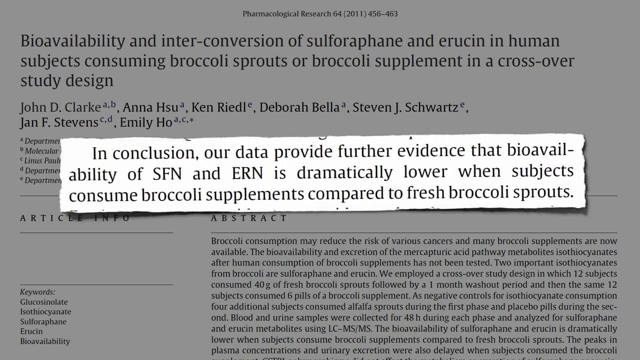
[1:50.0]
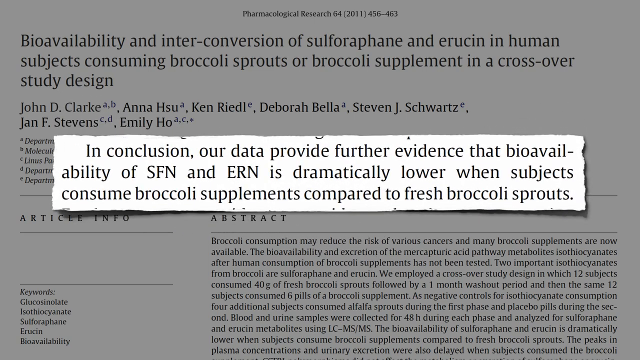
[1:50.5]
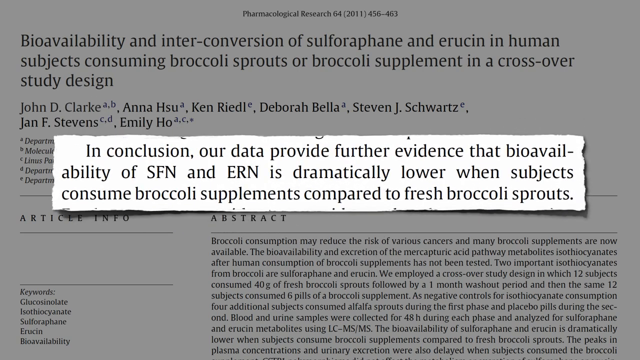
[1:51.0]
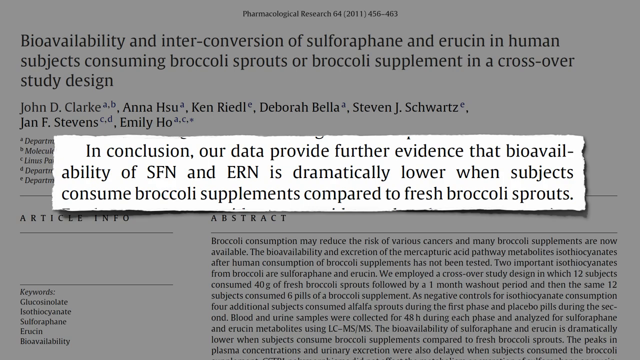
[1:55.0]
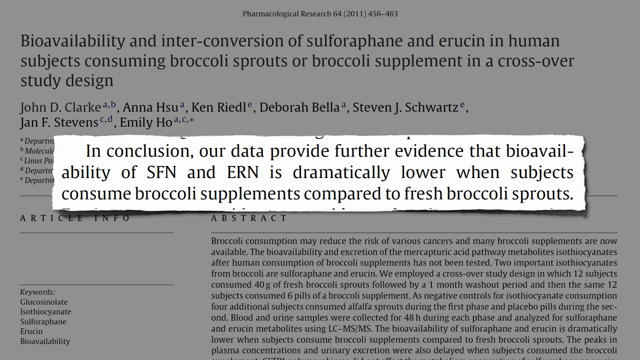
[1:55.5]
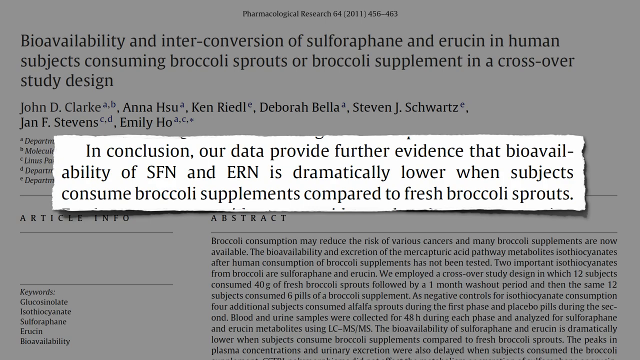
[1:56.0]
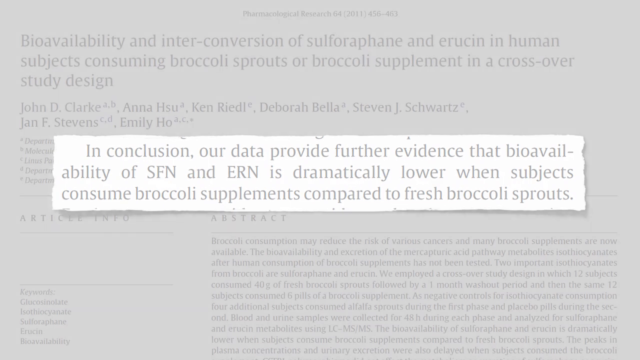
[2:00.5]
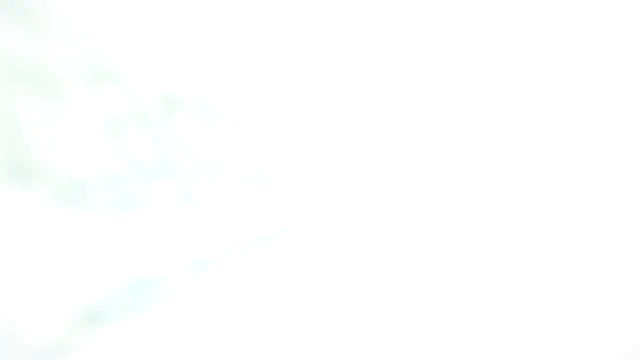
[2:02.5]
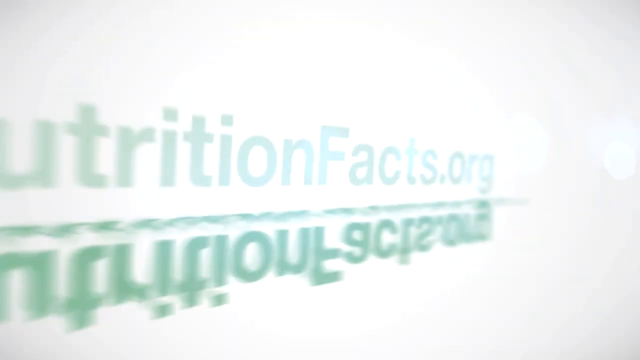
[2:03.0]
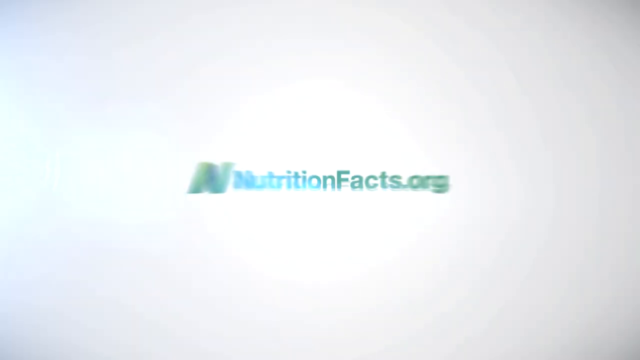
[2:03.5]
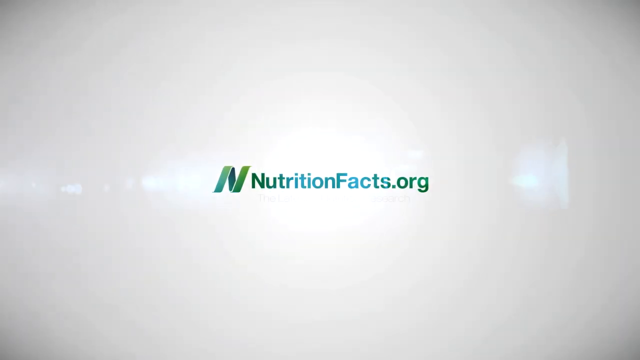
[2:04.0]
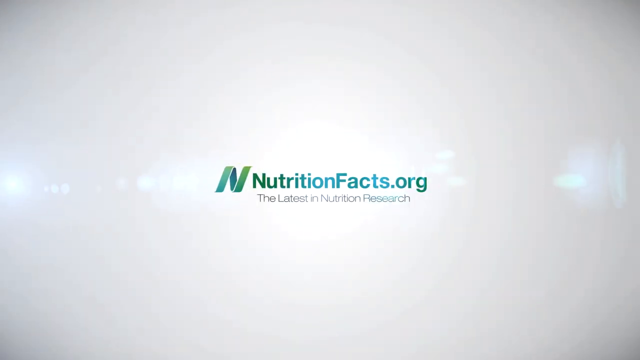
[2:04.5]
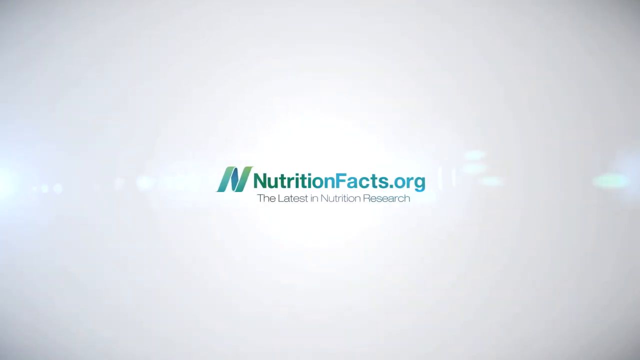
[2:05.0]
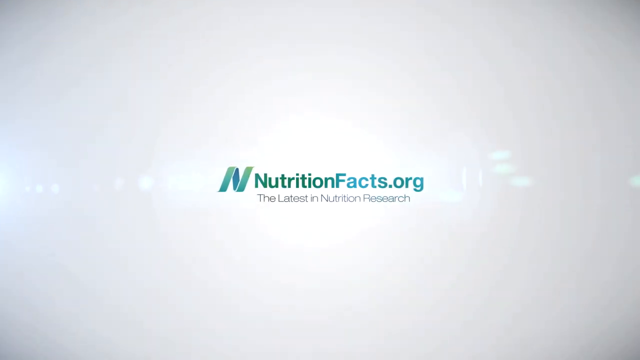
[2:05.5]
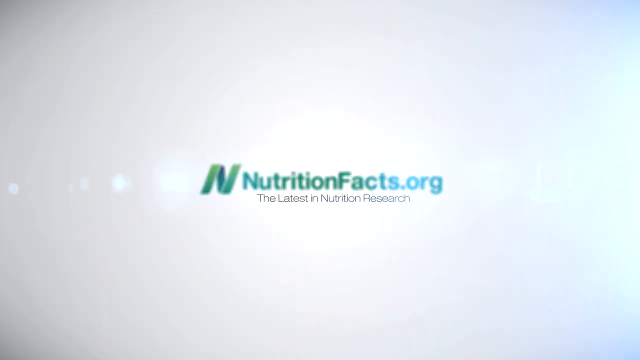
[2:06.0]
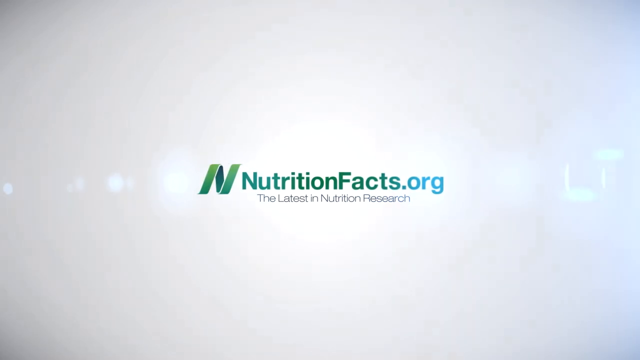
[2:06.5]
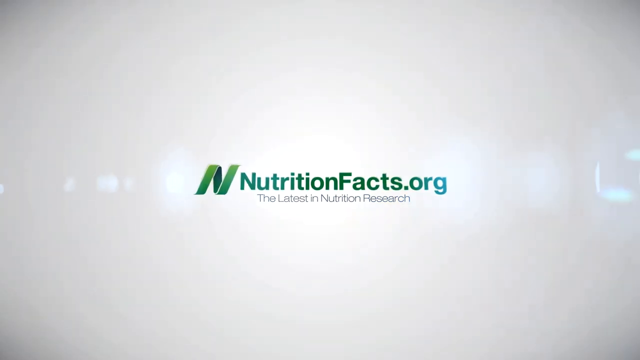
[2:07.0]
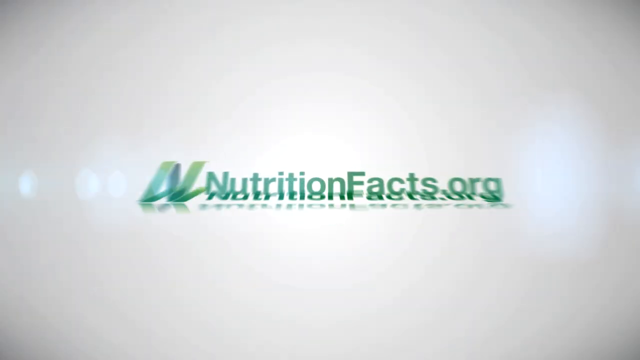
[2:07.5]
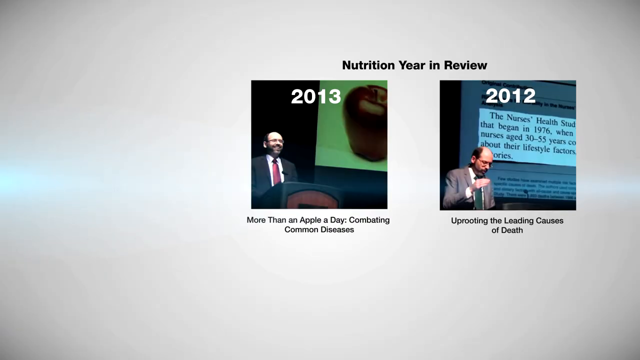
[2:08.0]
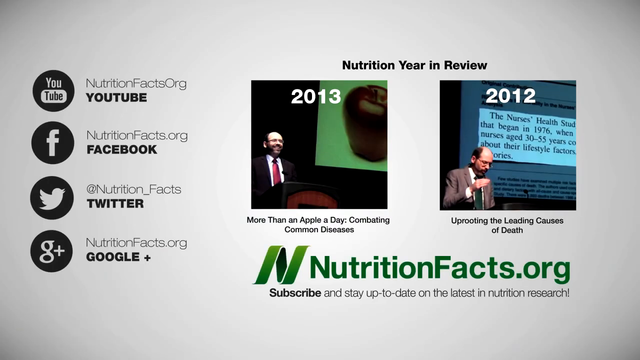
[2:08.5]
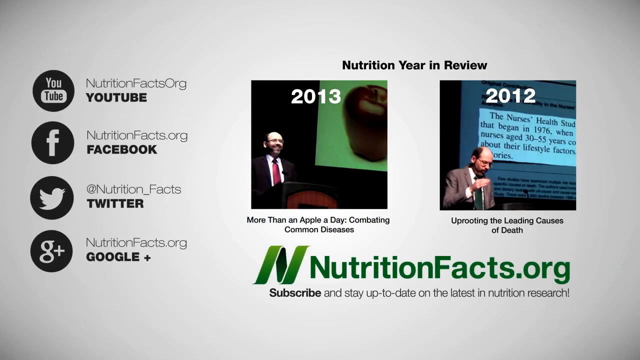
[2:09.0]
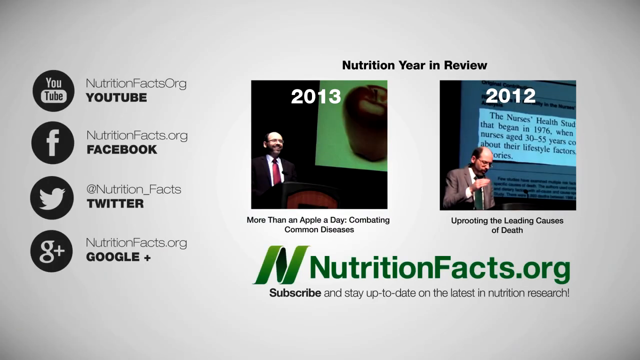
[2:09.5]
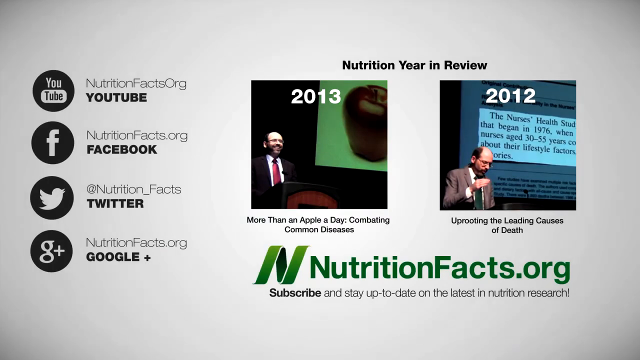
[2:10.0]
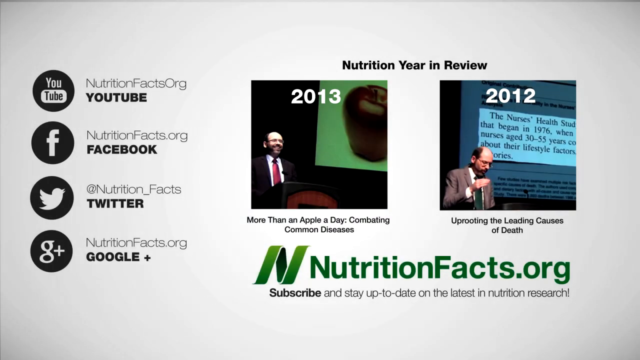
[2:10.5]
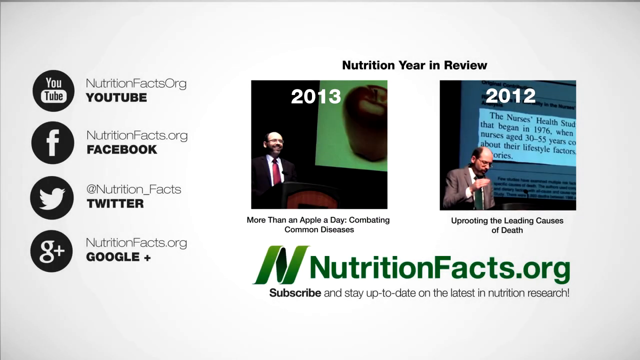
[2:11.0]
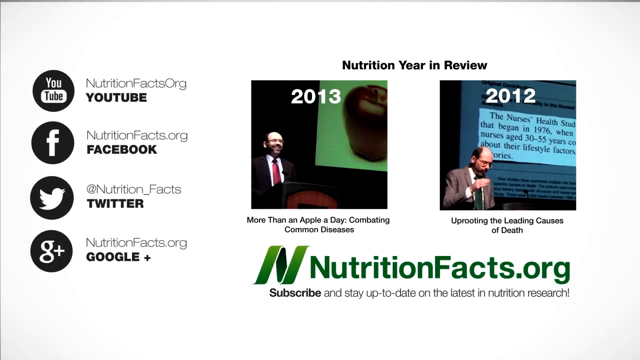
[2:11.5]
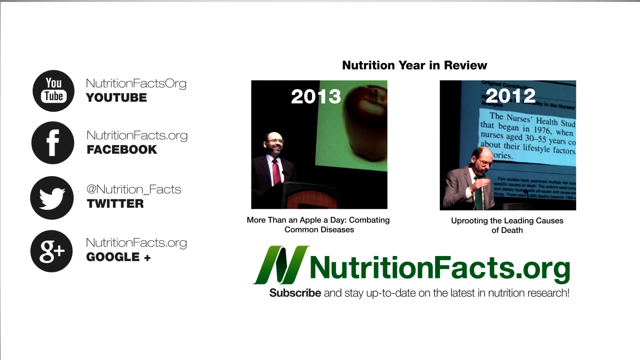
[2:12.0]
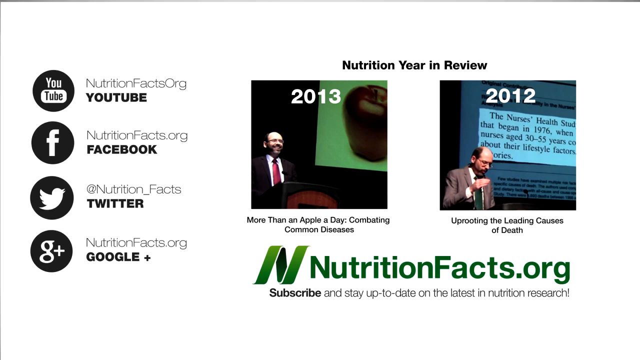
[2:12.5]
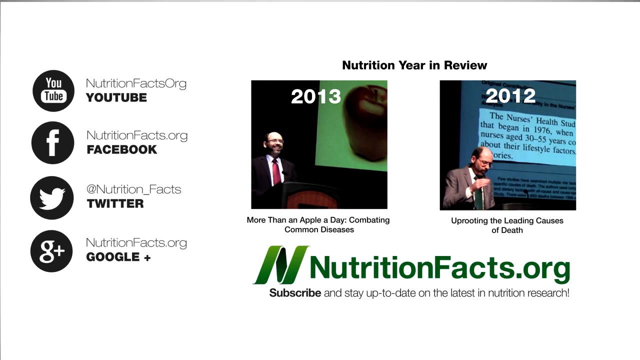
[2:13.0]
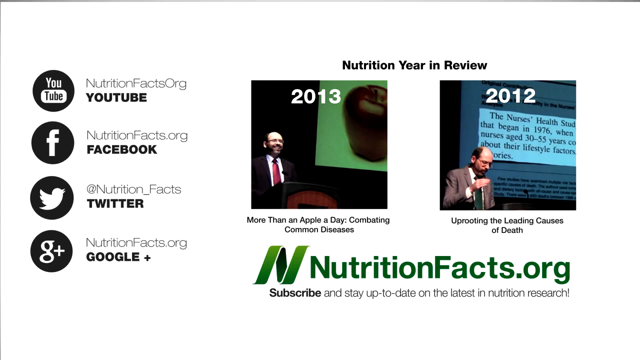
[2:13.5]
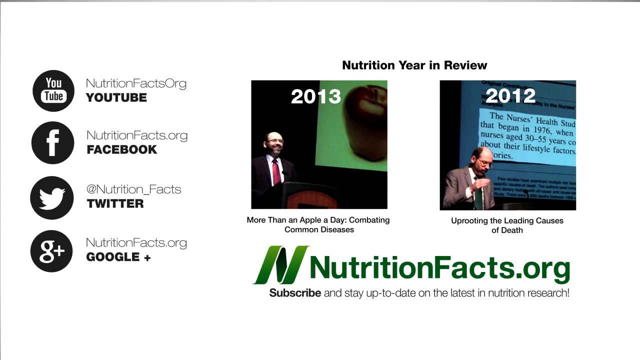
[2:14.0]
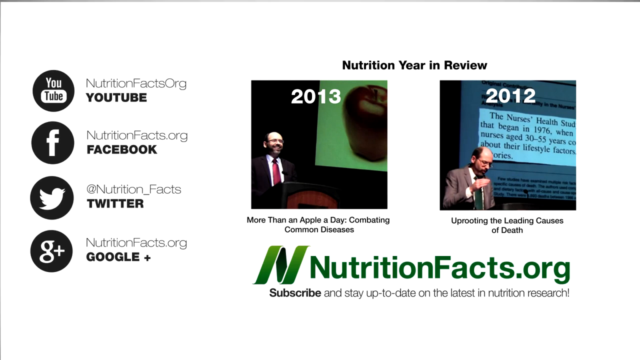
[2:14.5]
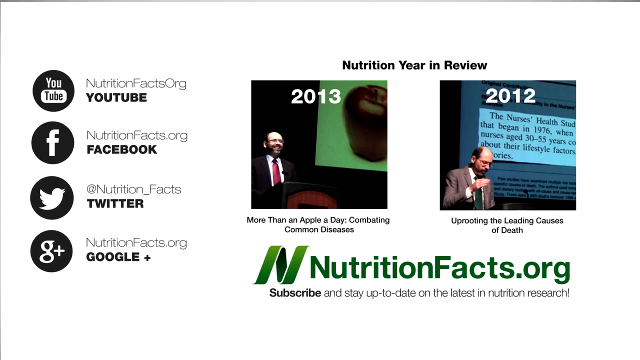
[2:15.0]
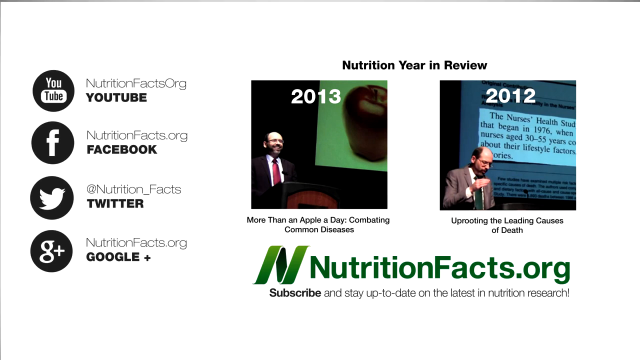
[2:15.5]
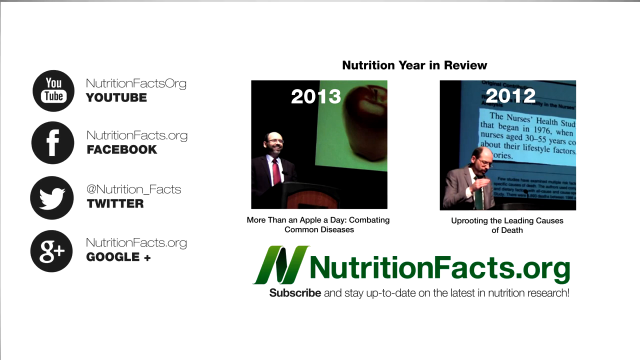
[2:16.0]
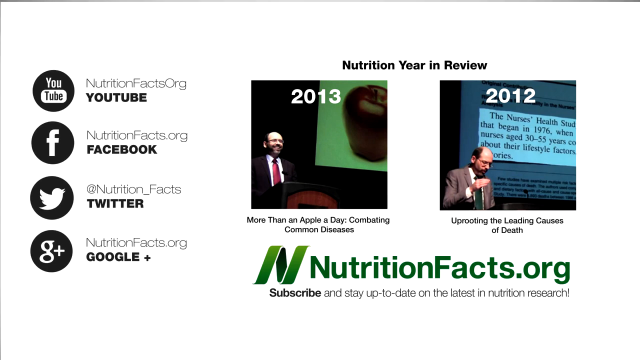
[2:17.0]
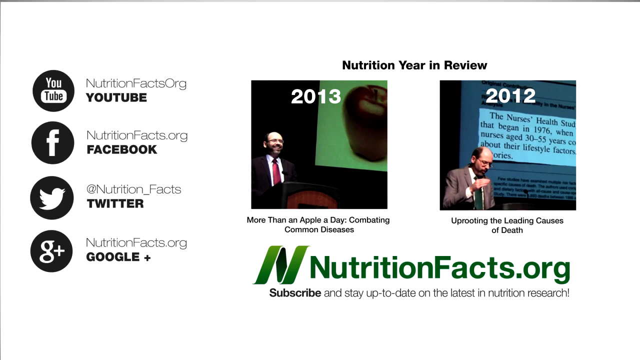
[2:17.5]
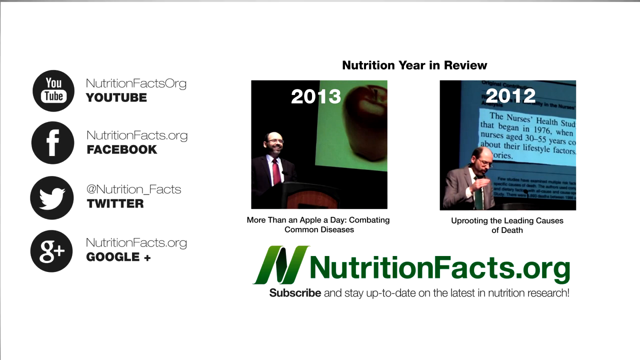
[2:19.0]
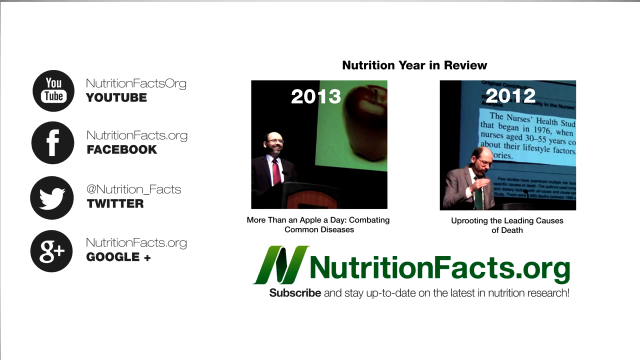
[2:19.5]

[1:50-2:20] A page of the article continues in the background while a specific part is highlighted in the middle, reading "in conclusion, our data provide further evidence that bioavailability of SFN and ERN is dramatically lower when subjects consume broccoli supplements compared to fresh broccoli sprouts." The video transitions to a solid white background, and an animation plays on the left side with the website "nutritionfacts.org" in the middle. Next to it is a large green N, the same color as the website text, and underneath it says "the latest in nutrition research", with a couple of flashing lights dispersed from the website. The final view says "nutrition year in review" in the middle and shows two videos, one for 2013 labeled "more than an apple a day combating common diseases" and one for 2012 labeled "uprooting the leading causes of death". On the left are icons for YouTube, Facebook, Twitter and Google+, showing how to contact them: "nutritionfacts.org" for YouTube, Facebook and Google+, and "nutritionfacts" for Twitter.